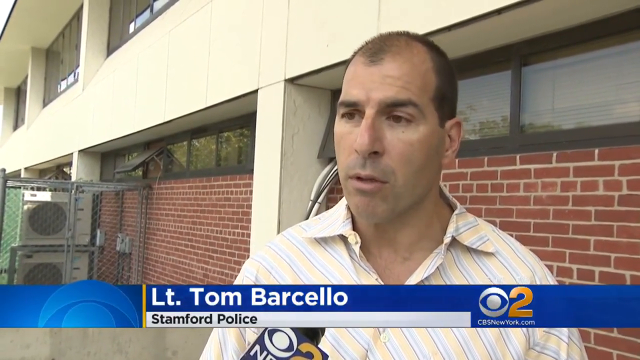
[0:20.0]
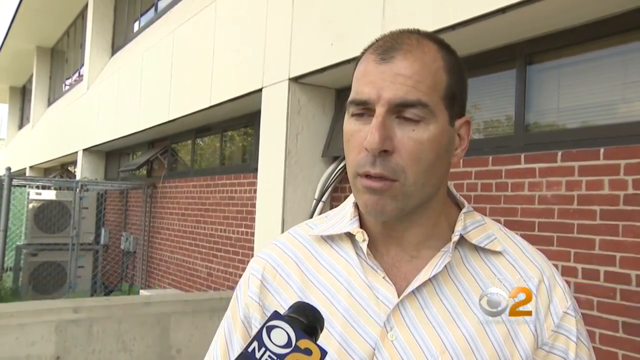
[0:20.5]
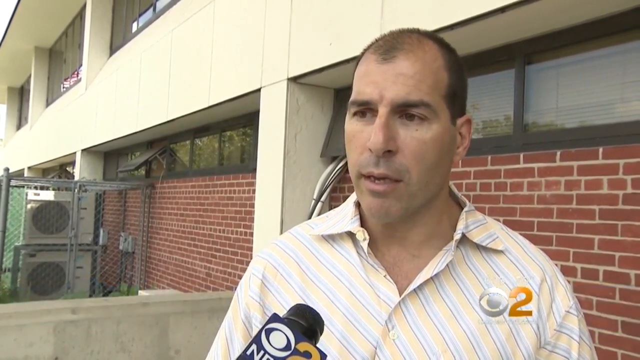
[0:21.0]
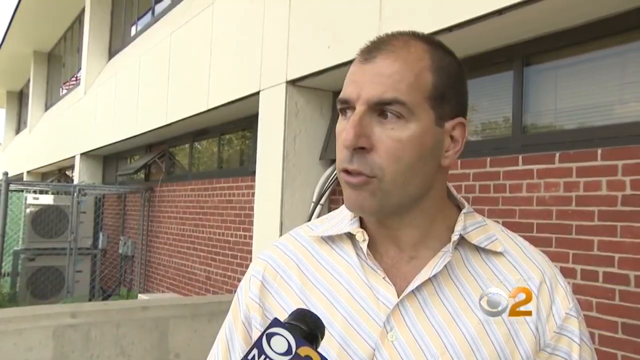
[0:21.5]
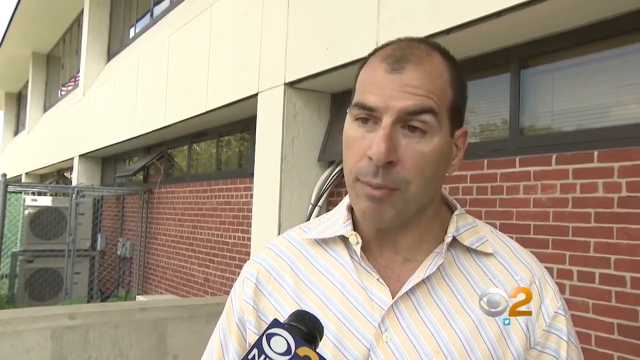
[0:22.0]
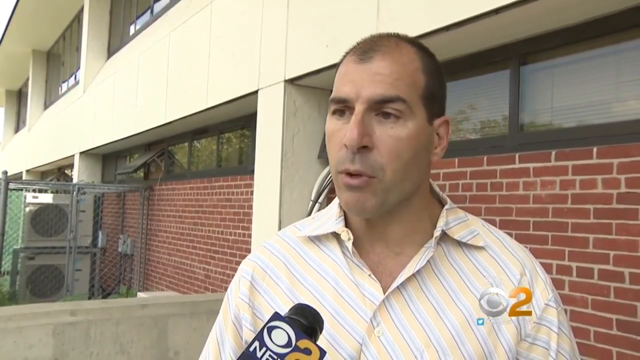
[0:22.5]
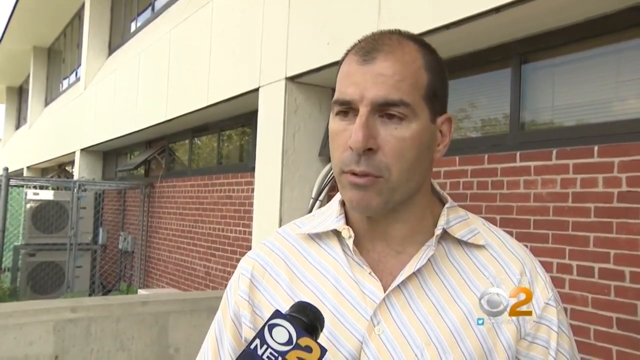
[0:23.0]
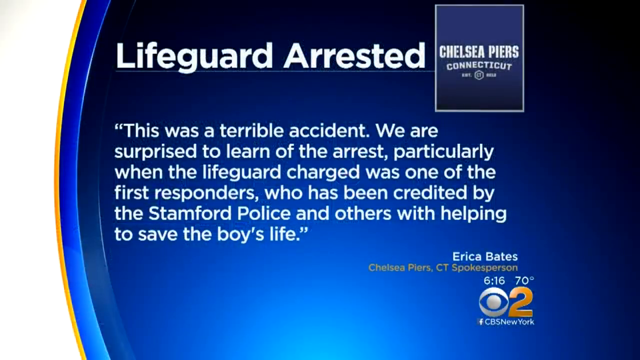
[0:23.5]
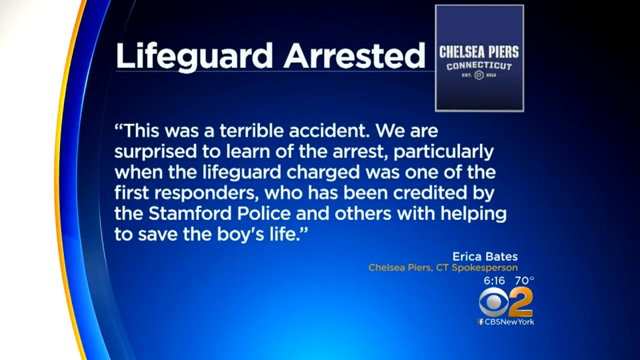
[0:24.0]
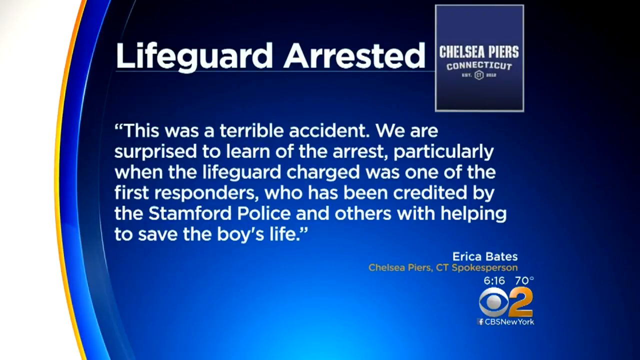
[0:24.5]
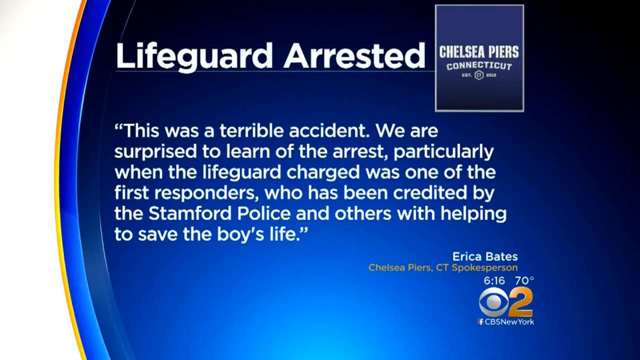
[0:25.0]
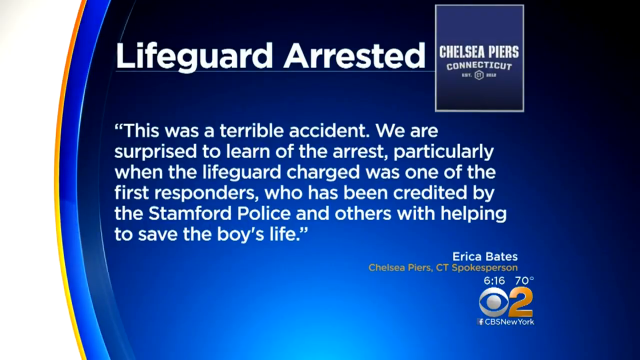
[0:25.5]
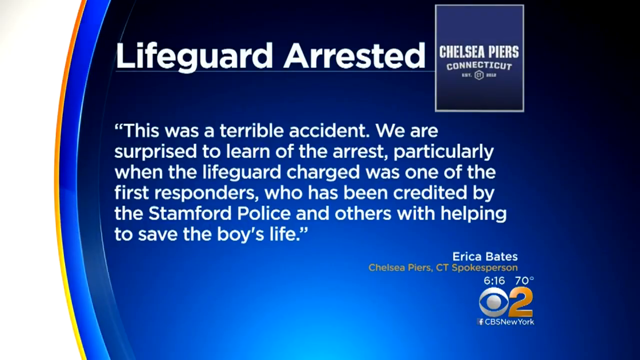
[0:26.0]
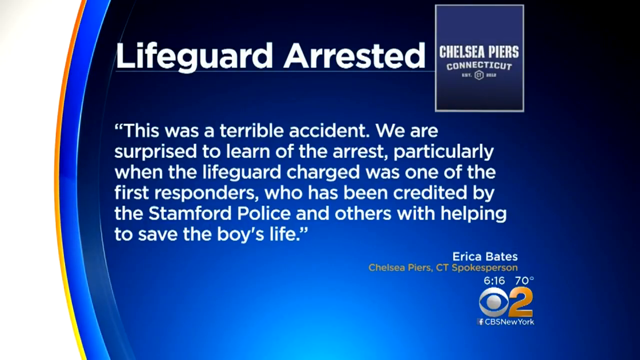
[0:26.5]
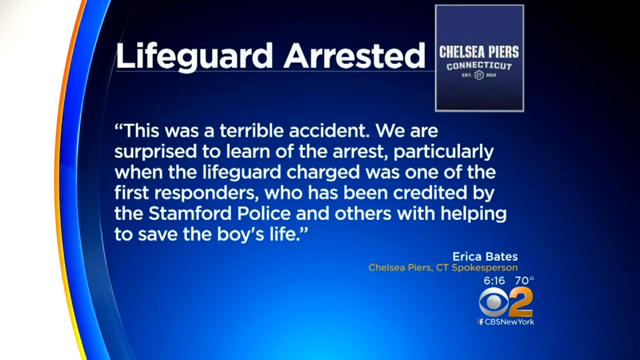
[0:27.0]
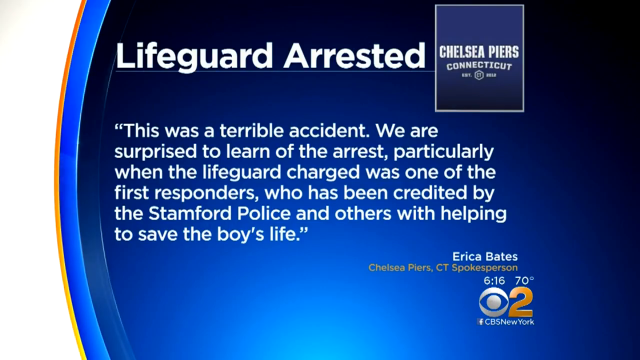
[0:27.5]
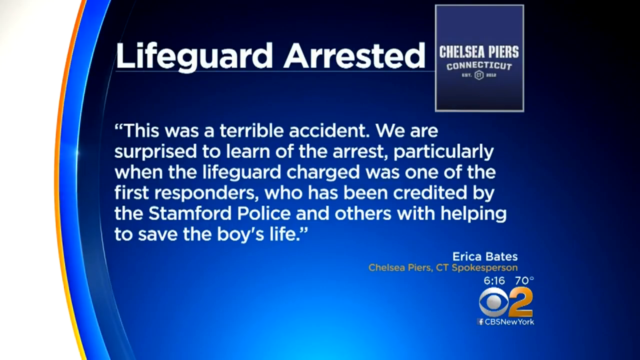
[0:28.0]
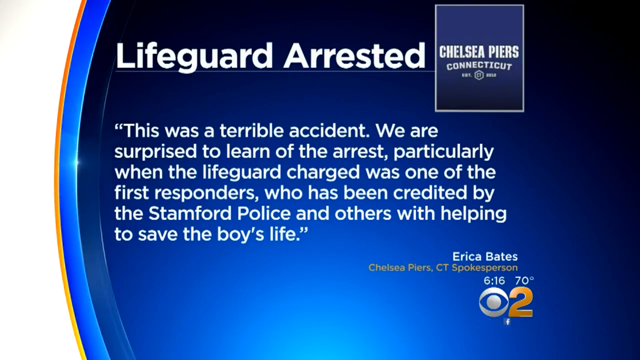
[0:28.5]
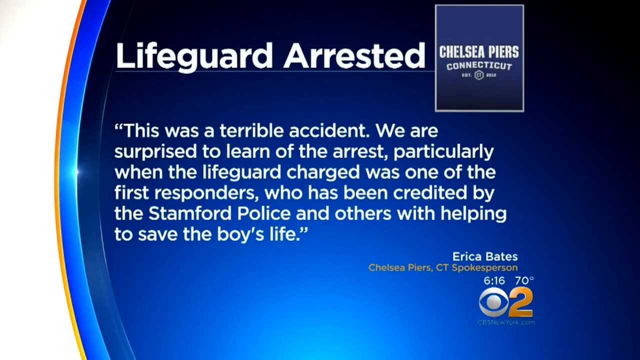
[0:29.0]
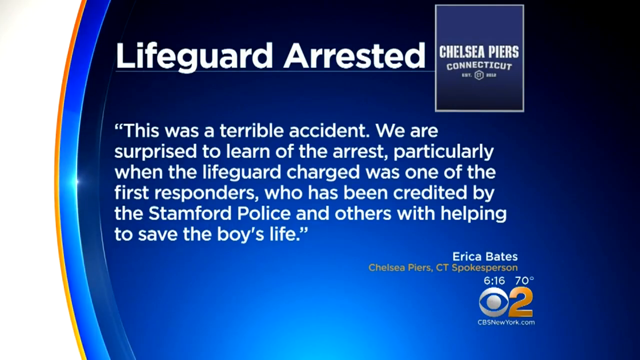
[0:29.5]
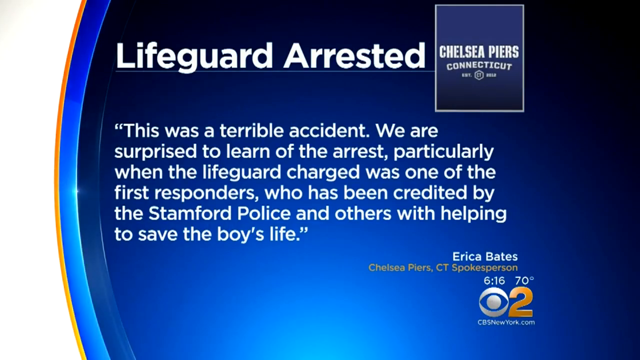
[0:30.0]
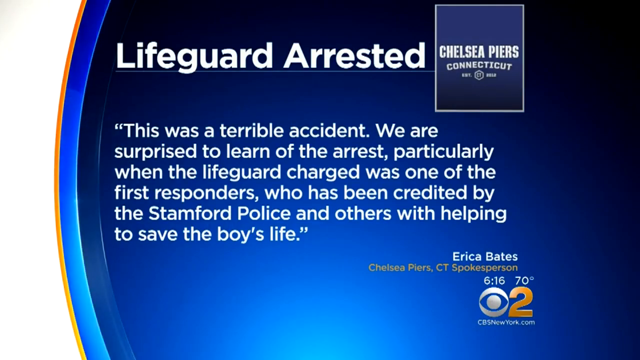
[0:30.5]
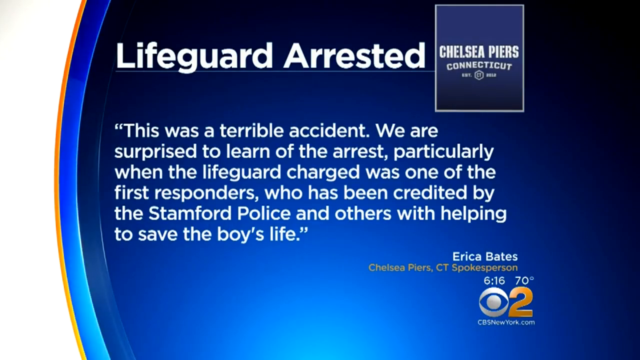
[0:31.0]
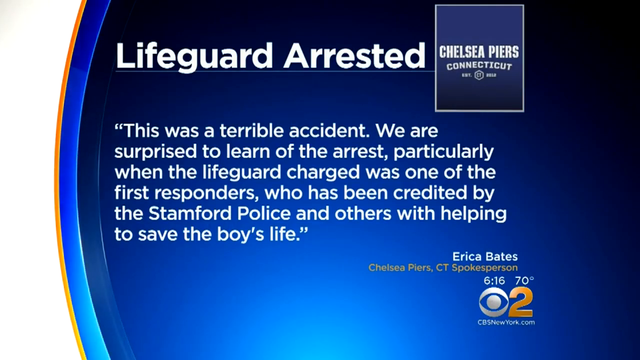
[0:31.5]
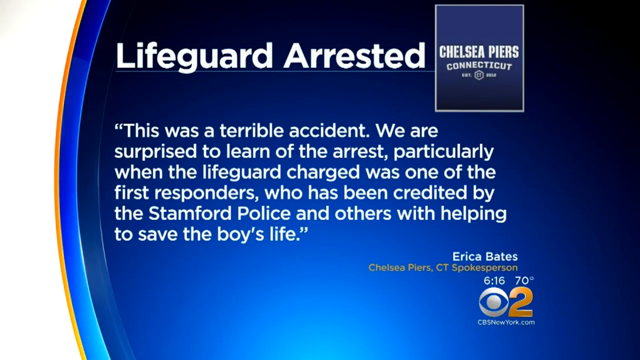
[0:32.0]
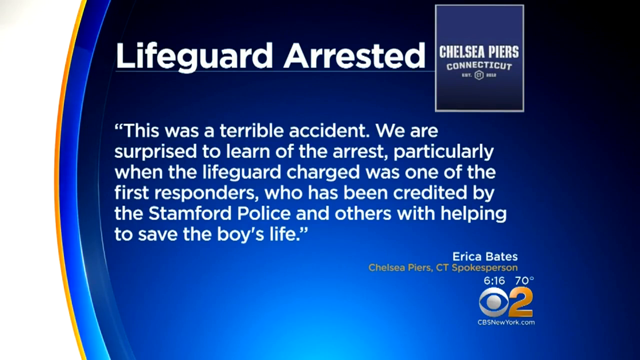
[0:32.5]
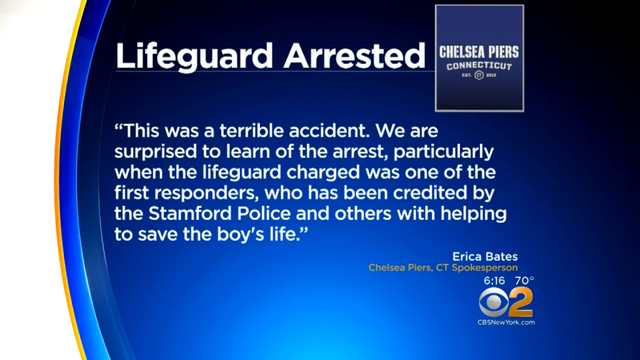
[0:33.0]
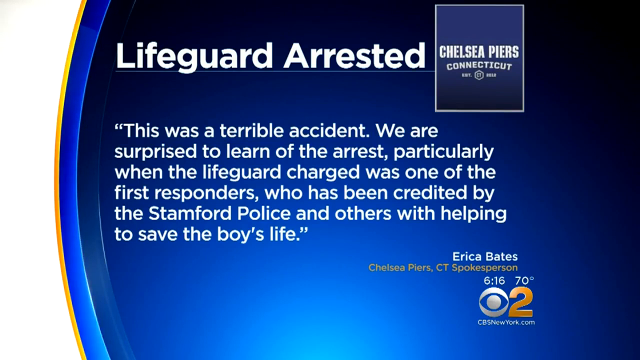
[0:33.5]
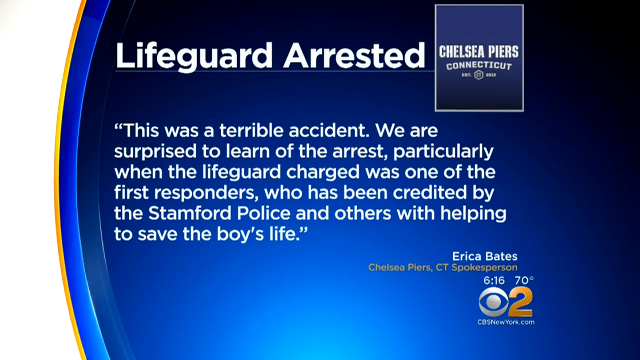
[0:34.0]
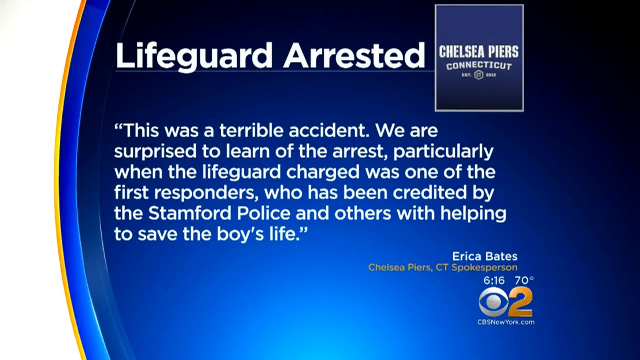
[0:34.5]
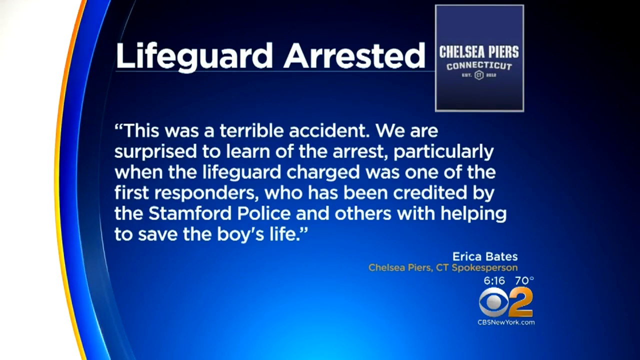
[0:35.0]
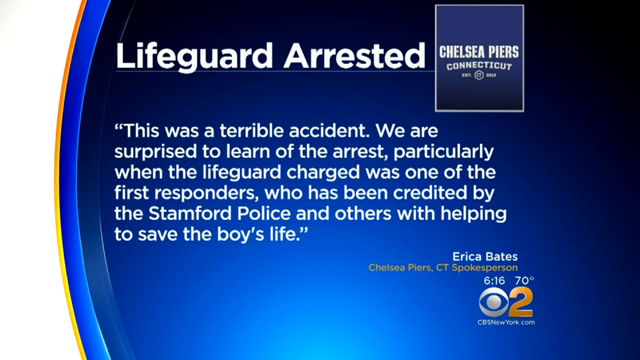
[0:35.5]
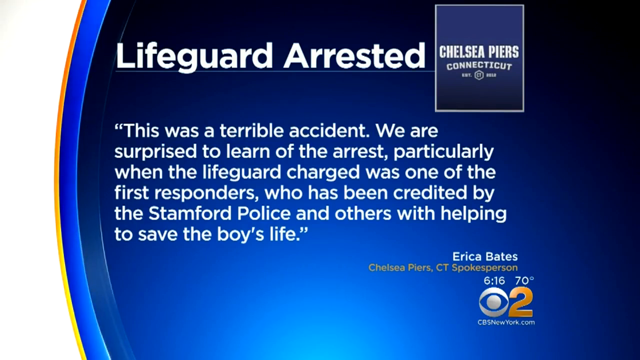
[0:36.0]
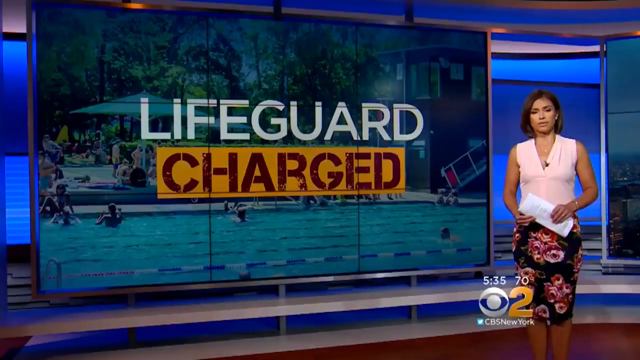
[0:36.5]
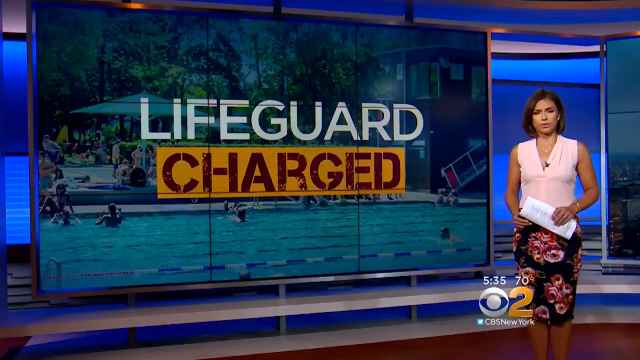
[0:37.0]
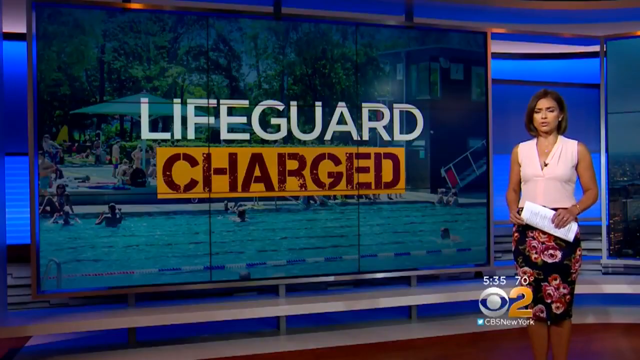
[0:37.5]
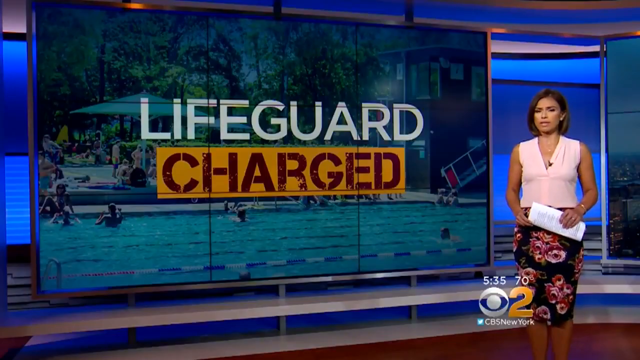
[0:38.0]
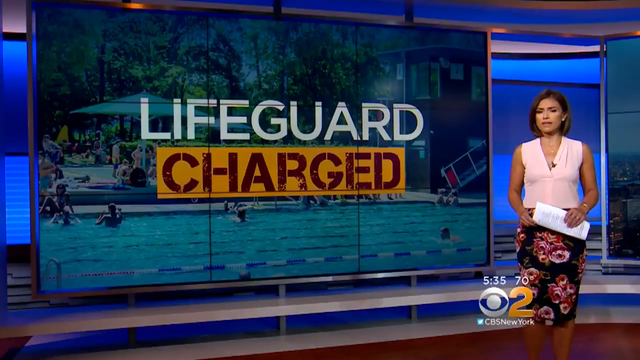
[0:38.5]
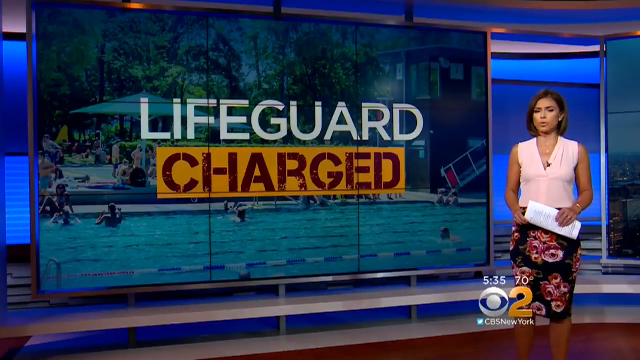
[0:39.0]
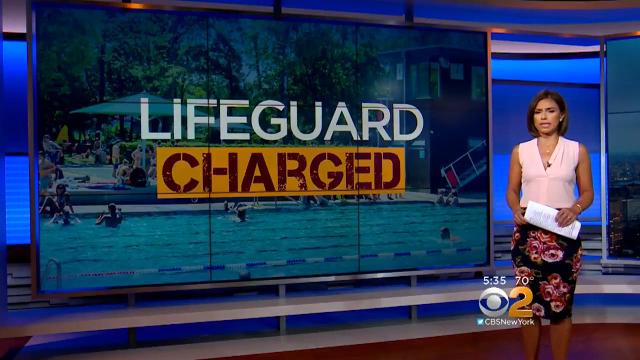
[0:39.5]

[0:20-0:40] The young man, apparently a lifeguard in a different city, is first shown in his mugshot; he looks young. The video cuts to B-roll of a street where the event happened at Chelsea Piers, then to B-roll of a crowd of people at what looks like an Olympic-sized outdoor pool. Lieutenant Tom Barcello of Stamford Police is shown talking. The video then cuts to clips of the young man in court and shows court documents, with text stating that the lifeguard in Connecticut pleads not guilty in a child near-drowning case.